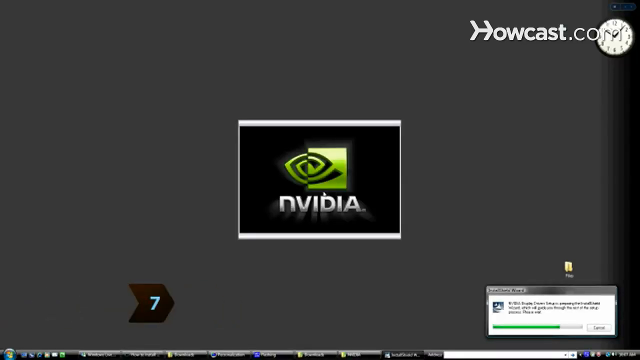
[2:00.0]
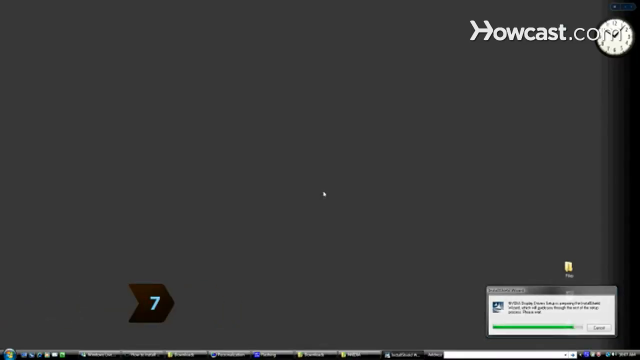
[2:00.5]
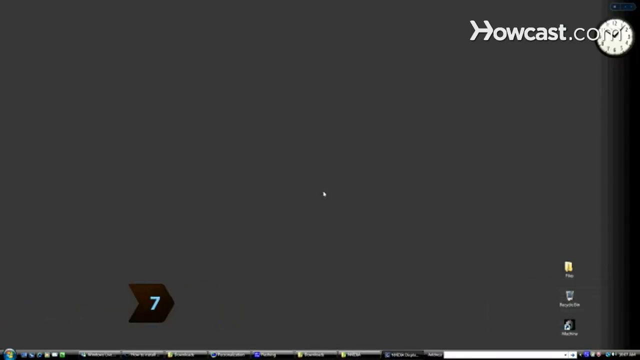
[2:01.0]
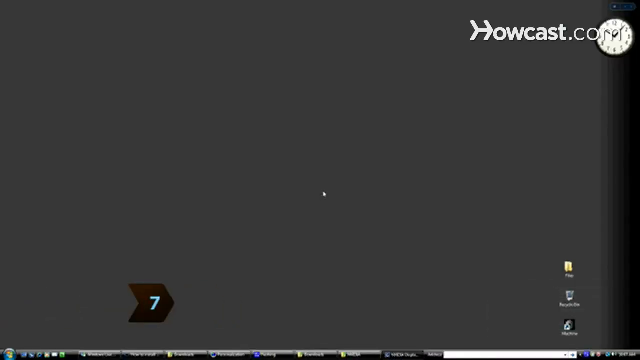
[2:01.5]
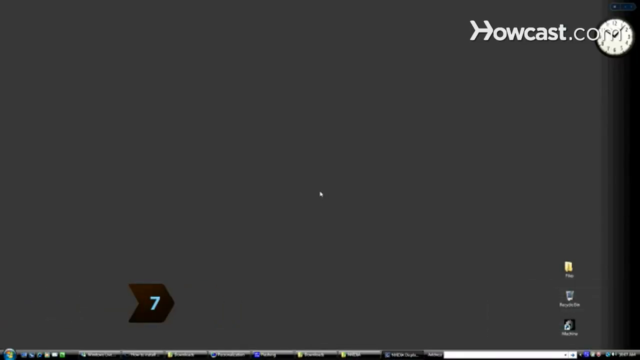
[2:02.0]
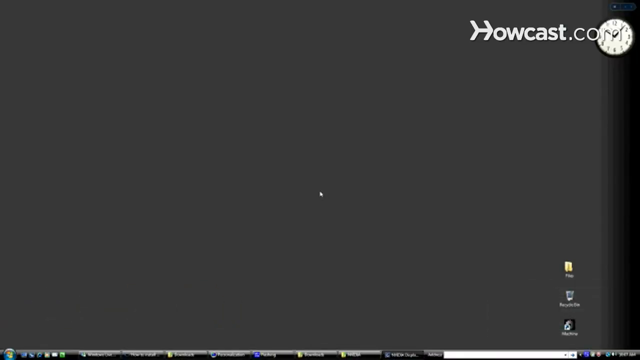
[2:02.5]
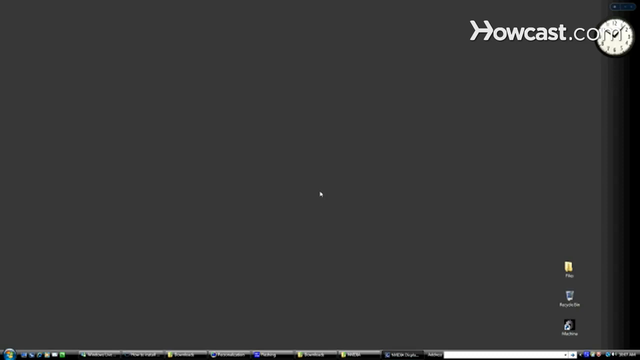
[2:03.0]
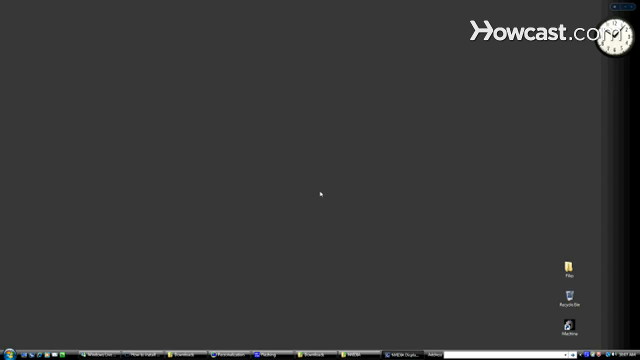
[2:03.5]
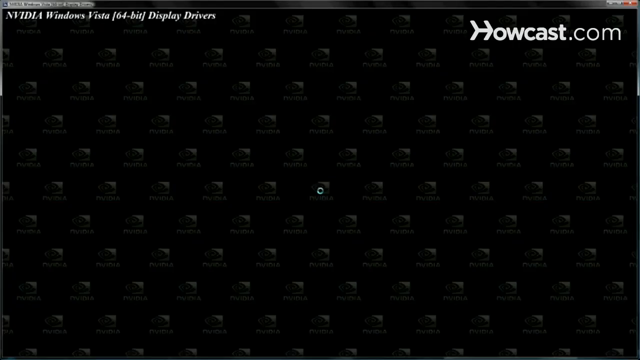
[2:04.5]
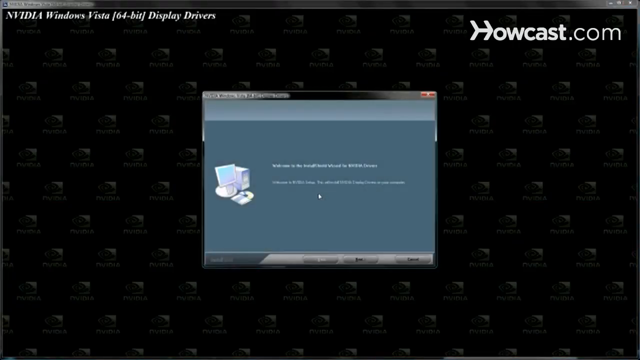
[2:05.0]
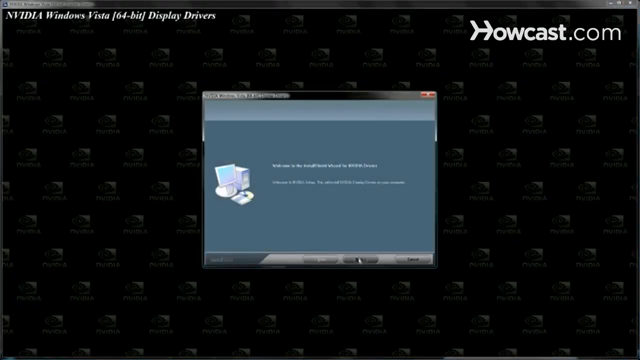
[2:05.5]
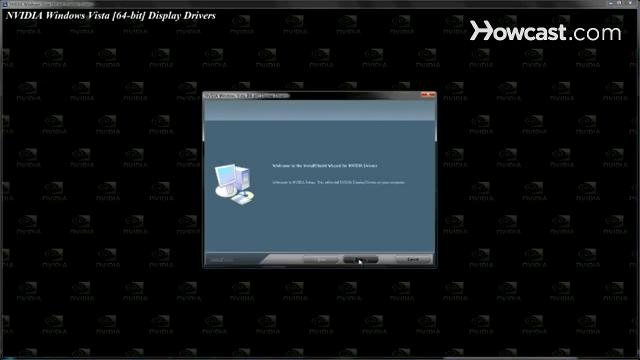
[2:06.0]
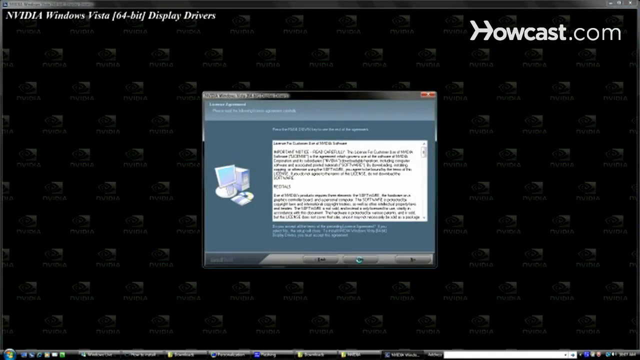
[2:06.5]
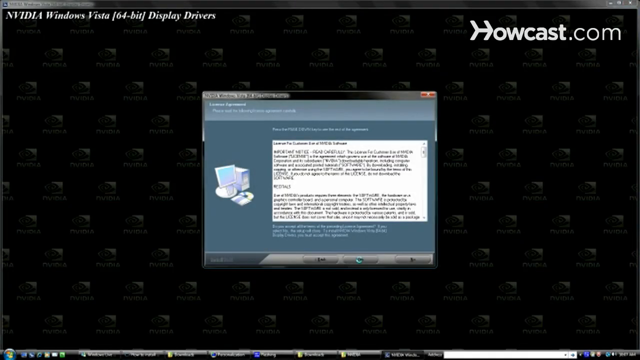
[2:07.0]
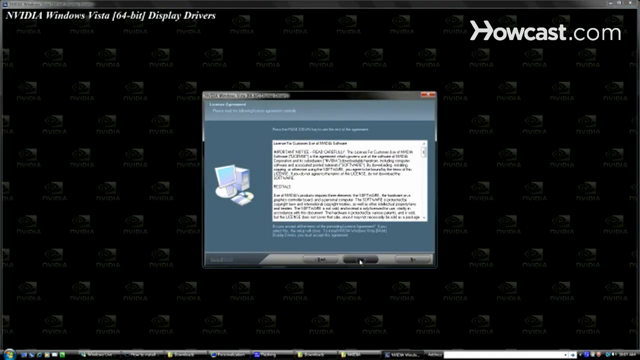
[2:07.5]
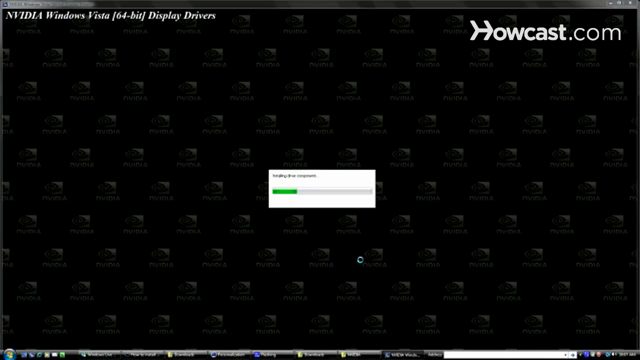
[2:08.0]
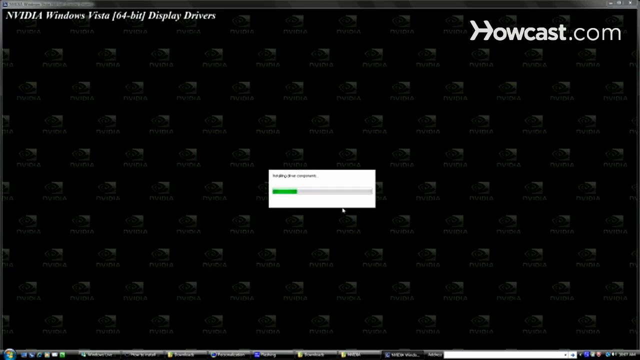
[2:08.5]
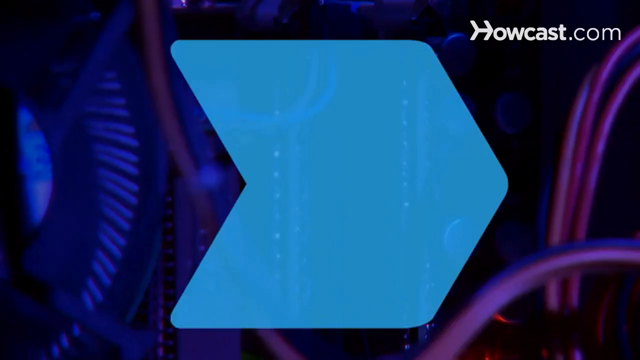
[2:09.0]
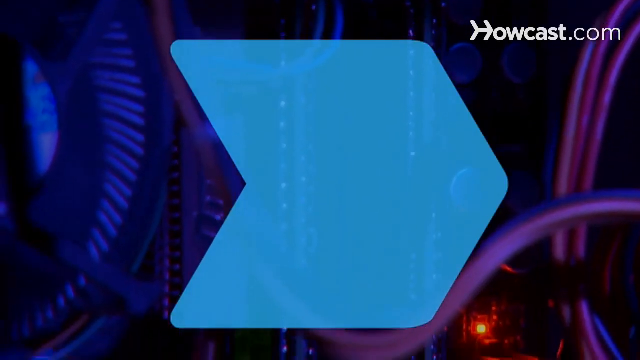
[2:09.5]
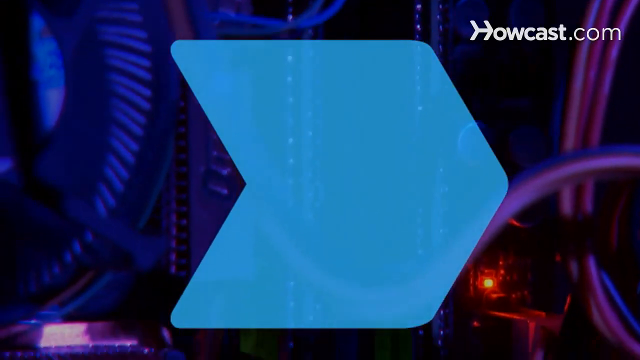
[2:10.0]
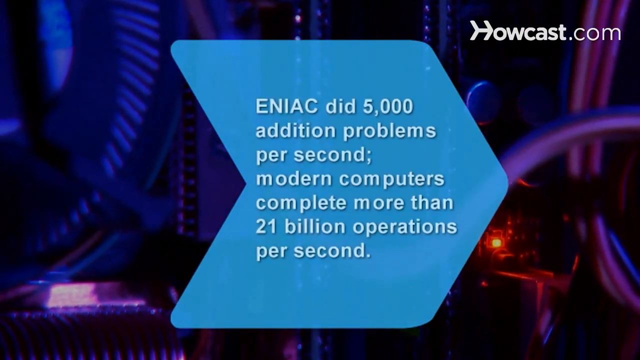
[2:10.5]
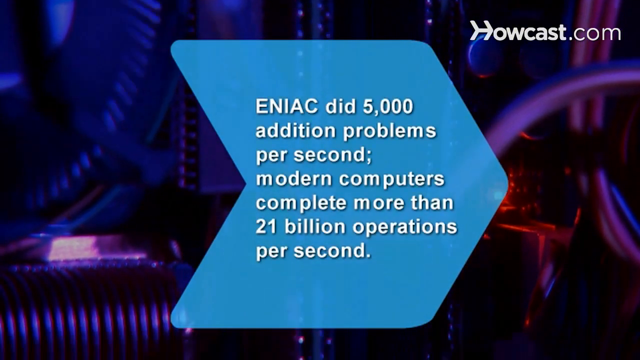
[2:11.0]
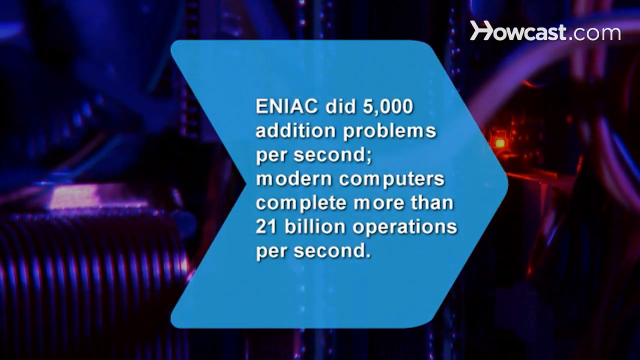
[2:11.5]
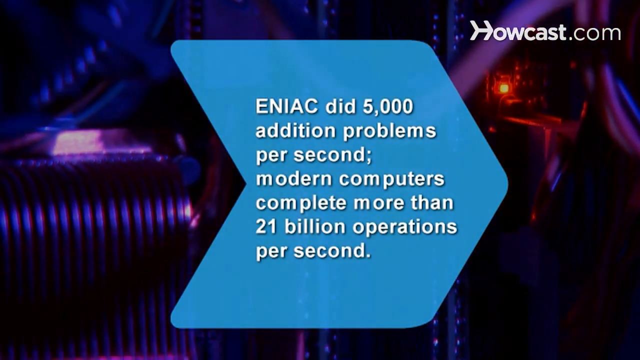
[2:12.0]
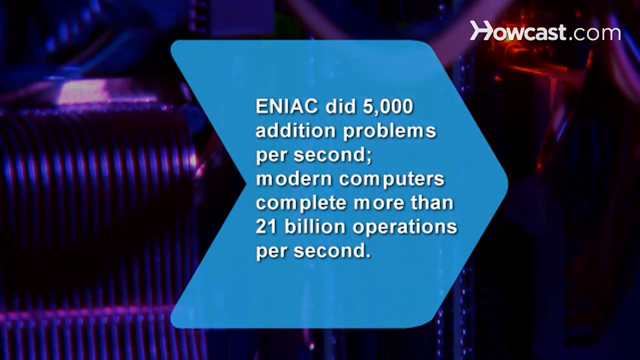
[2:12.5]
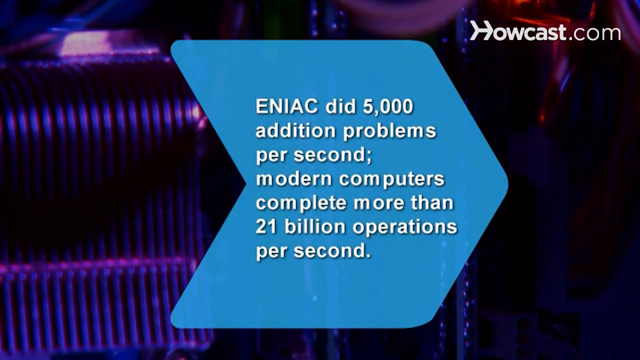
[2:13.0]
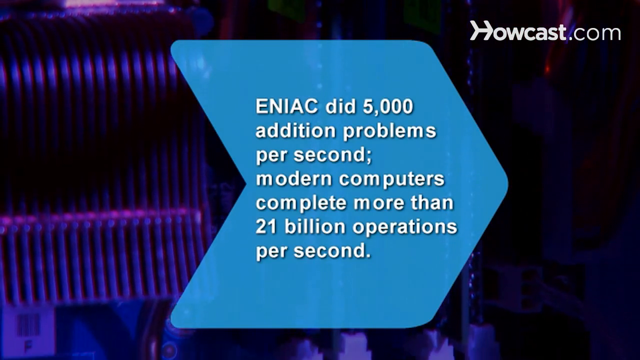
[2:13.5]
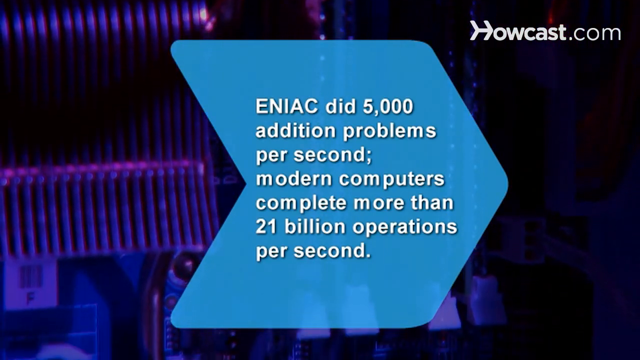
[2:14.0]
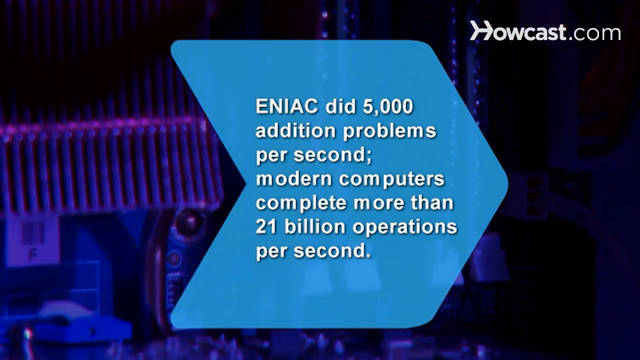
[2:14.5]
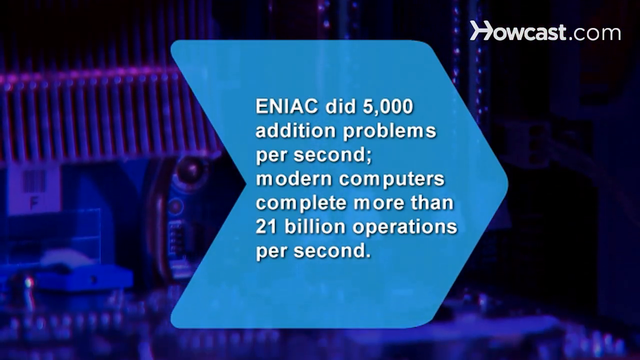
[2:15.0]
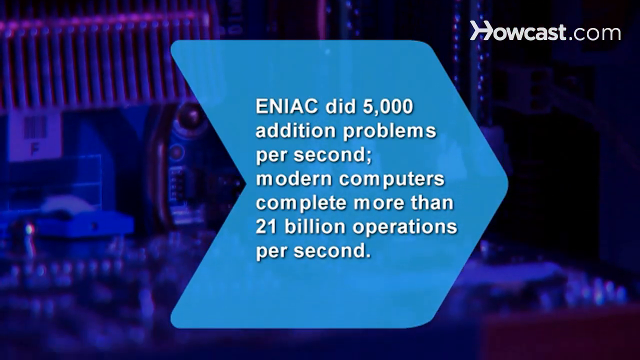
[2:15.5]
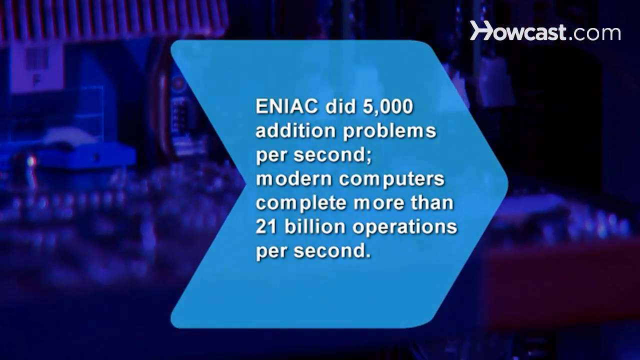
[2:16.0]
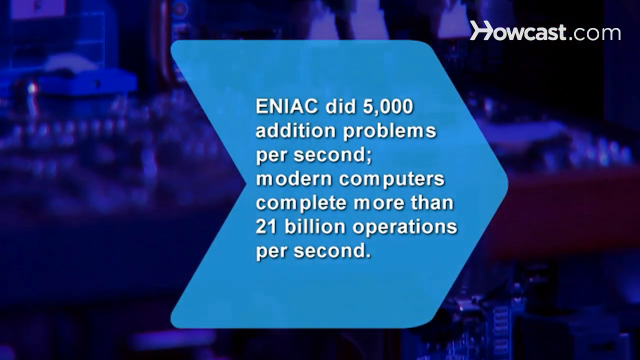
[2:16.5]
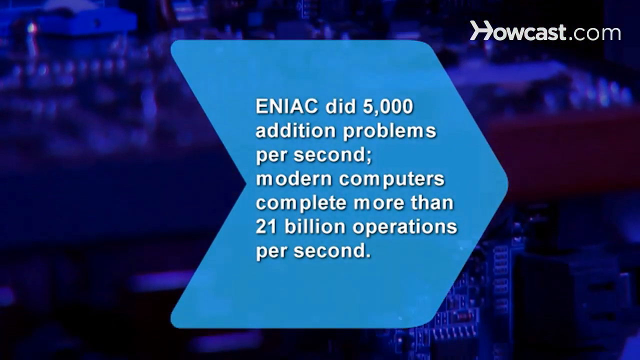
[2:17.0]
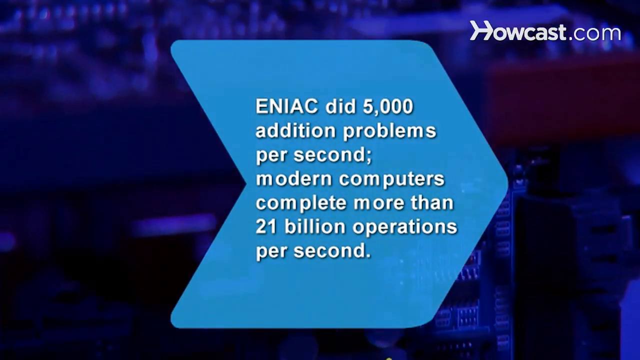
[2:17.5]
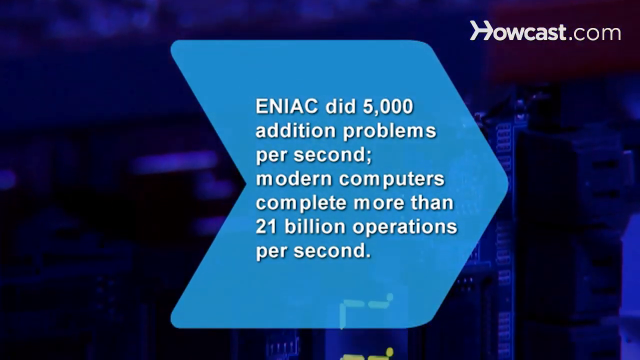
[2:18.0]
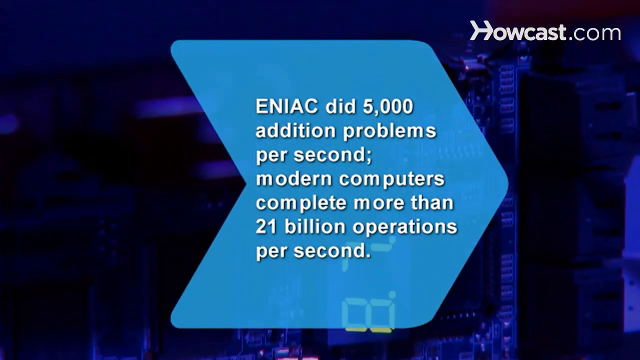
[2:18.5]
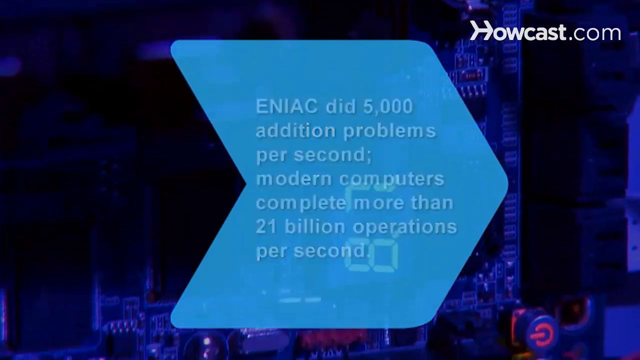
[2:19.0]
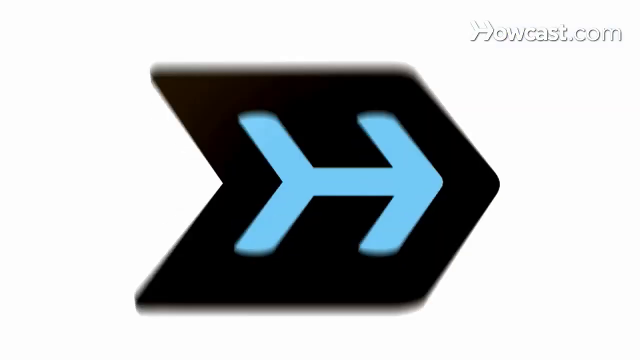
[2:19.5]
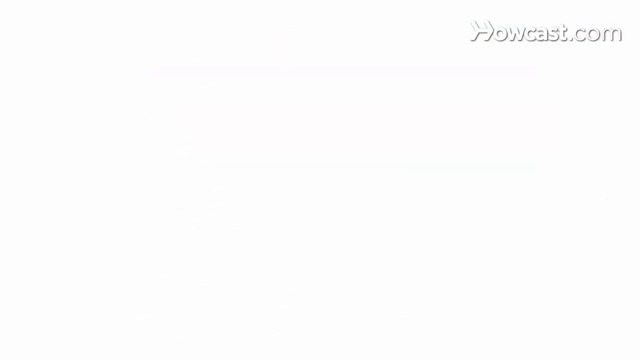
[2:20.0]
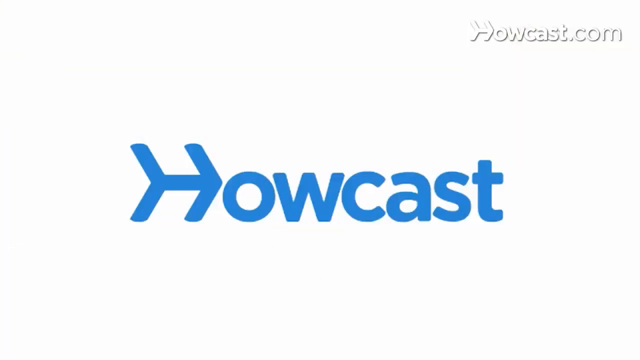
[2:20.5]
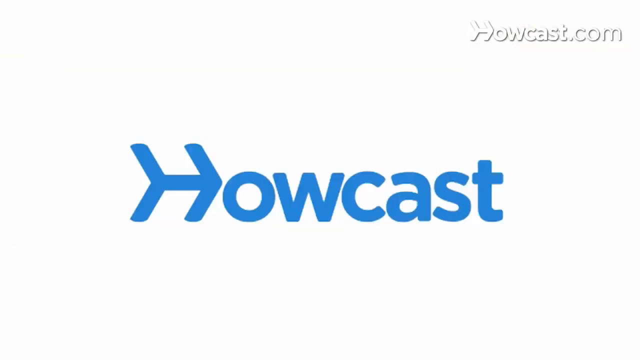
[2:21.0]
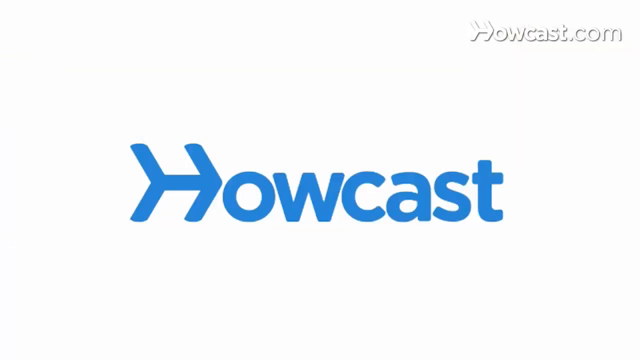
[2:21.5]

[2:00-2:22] After the cable is plugged in, an interface is on the screen, apparently the outro of the video.